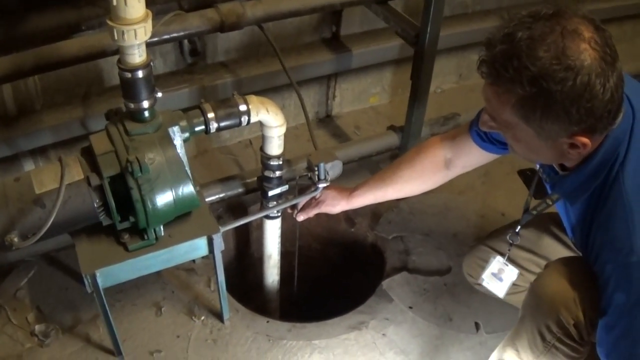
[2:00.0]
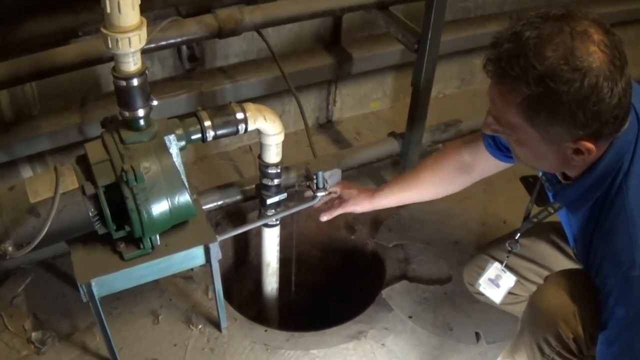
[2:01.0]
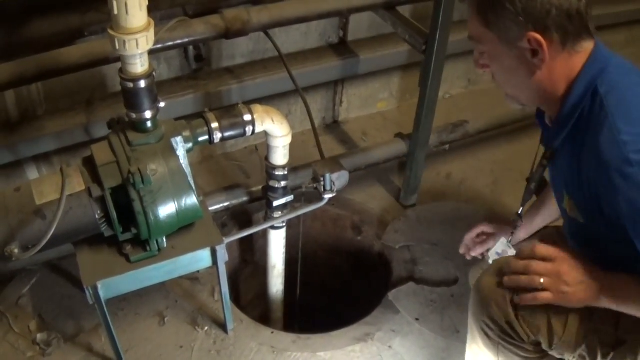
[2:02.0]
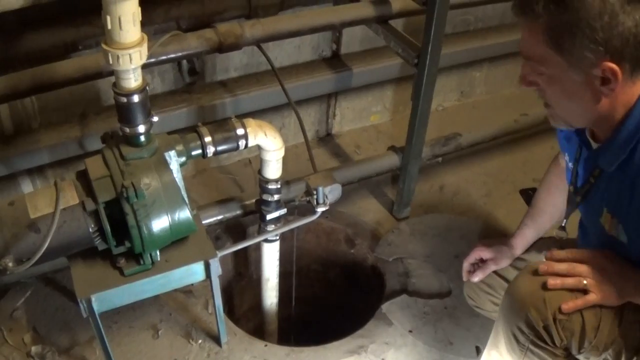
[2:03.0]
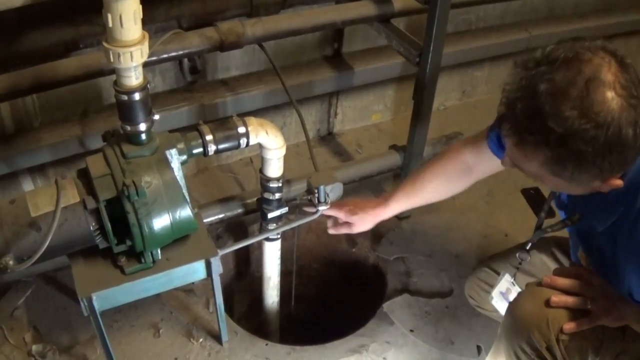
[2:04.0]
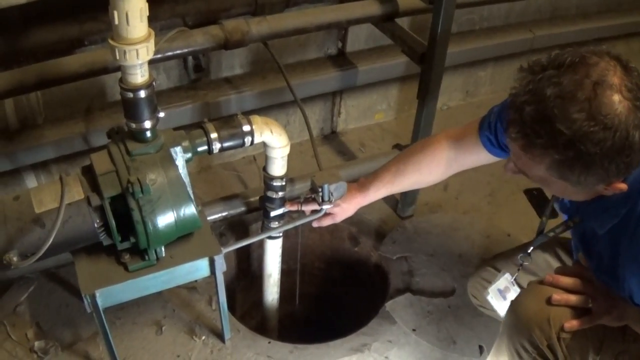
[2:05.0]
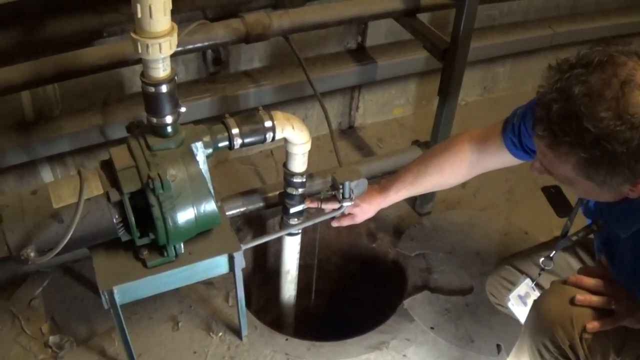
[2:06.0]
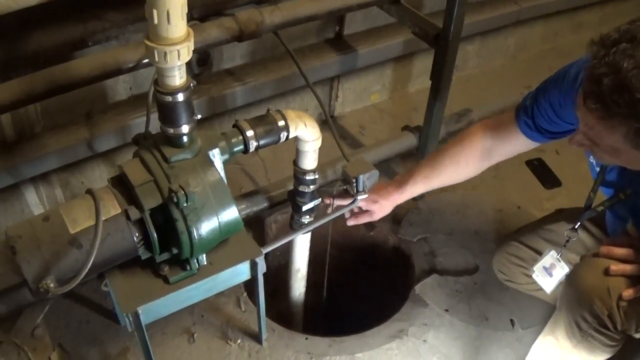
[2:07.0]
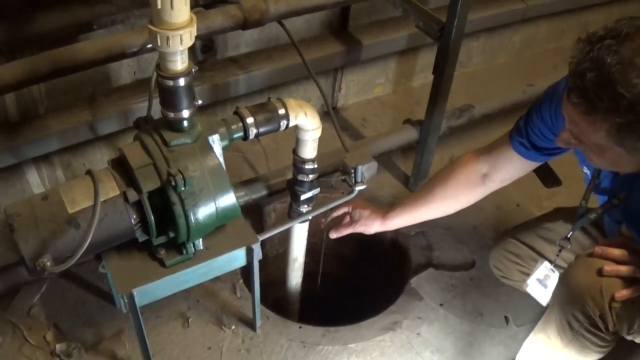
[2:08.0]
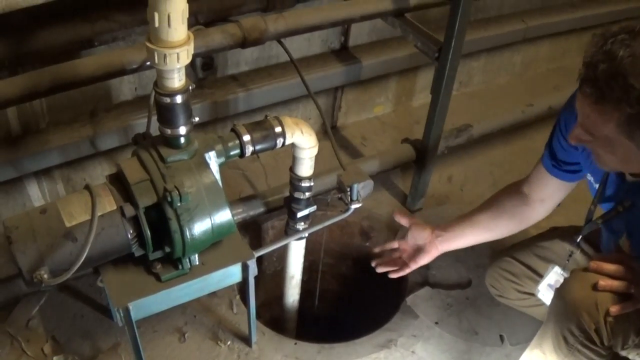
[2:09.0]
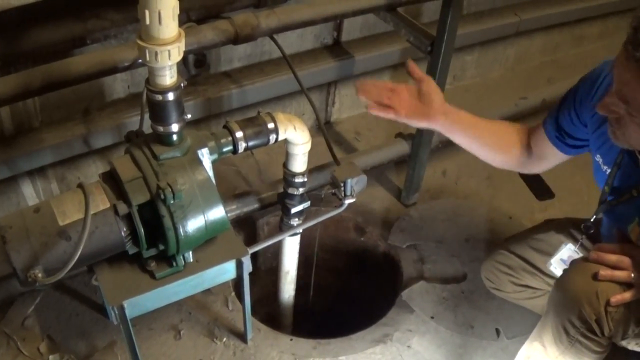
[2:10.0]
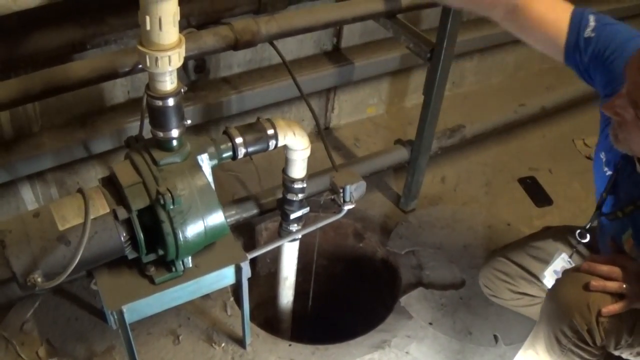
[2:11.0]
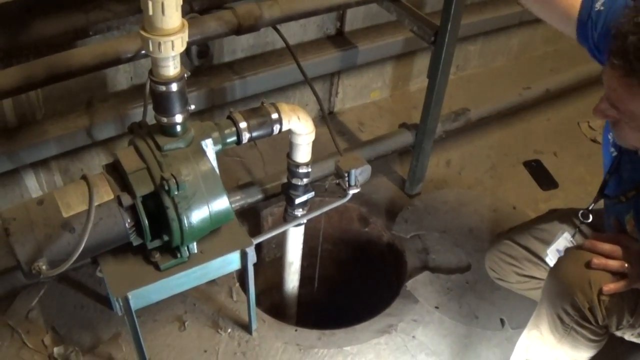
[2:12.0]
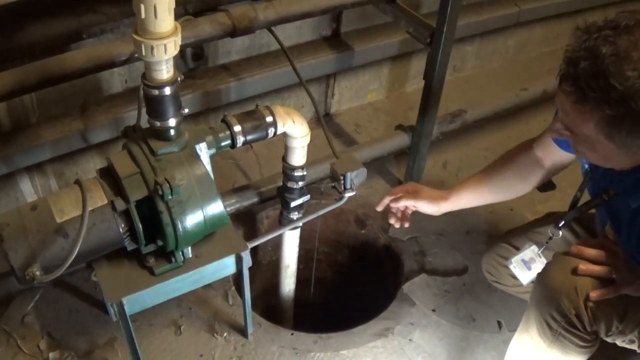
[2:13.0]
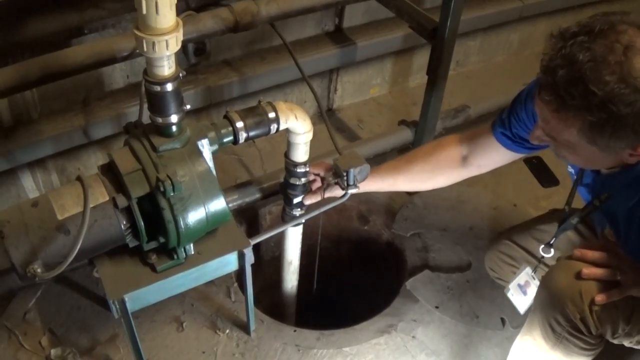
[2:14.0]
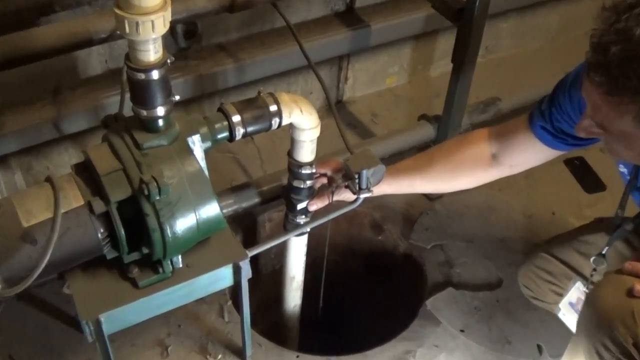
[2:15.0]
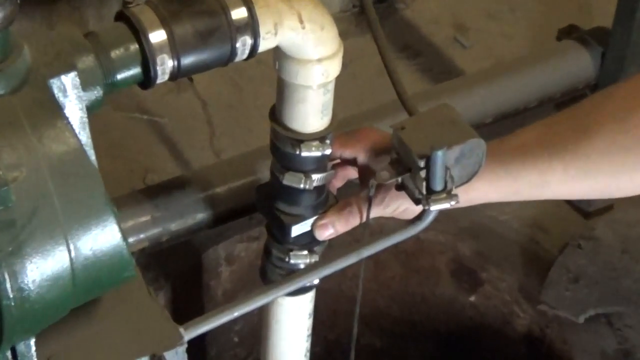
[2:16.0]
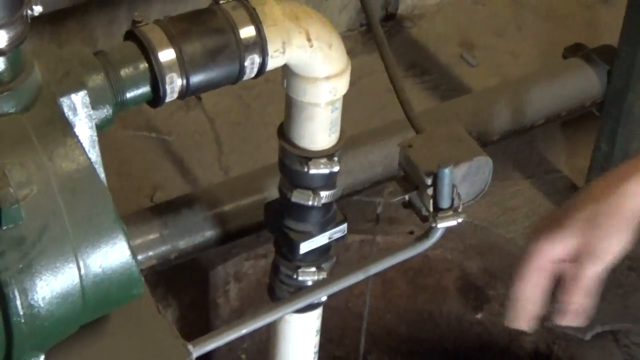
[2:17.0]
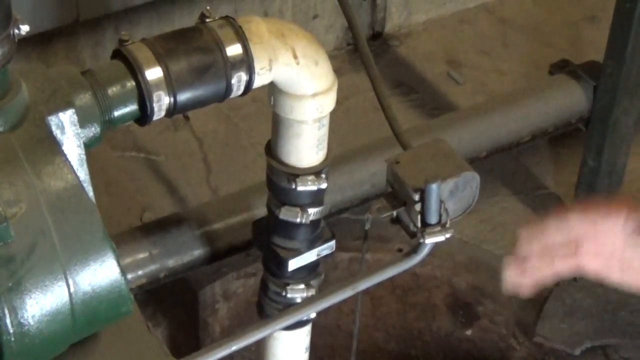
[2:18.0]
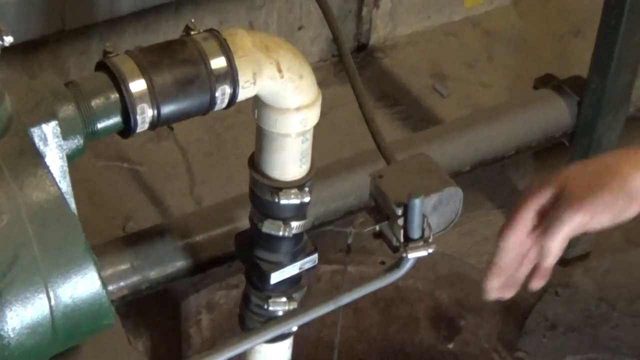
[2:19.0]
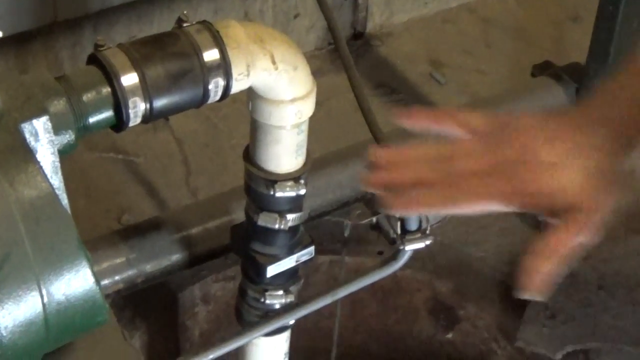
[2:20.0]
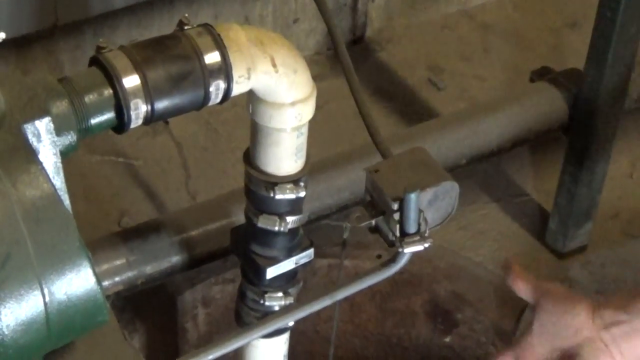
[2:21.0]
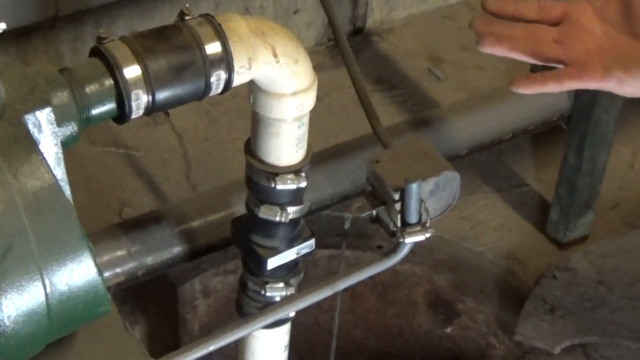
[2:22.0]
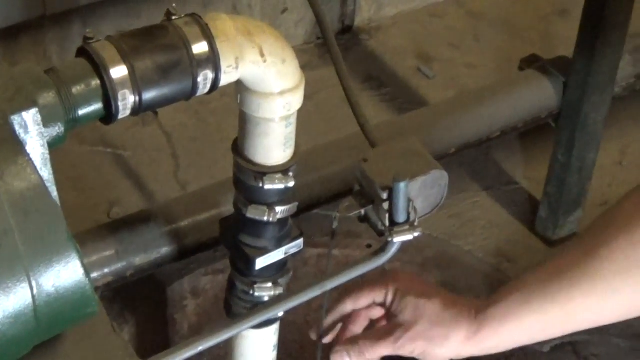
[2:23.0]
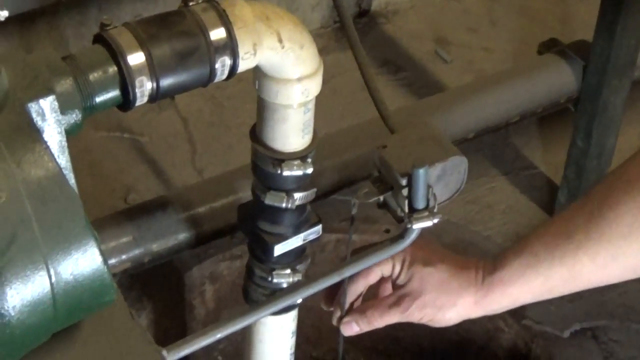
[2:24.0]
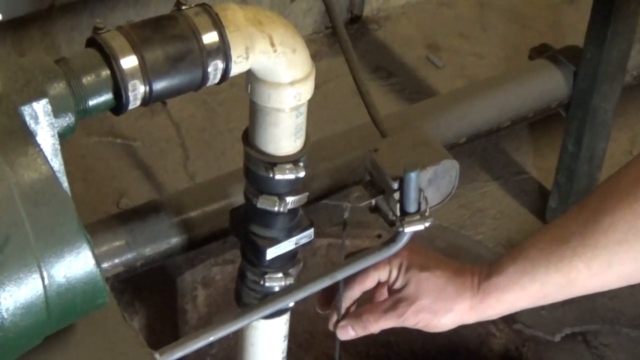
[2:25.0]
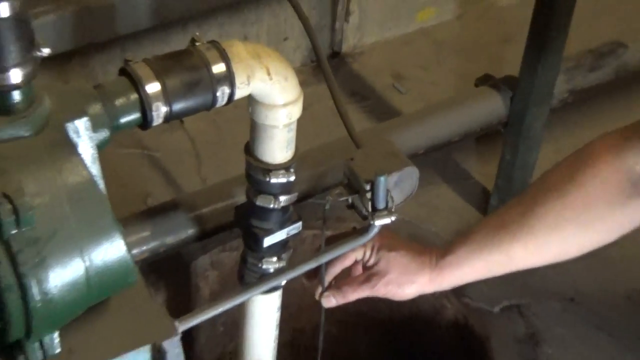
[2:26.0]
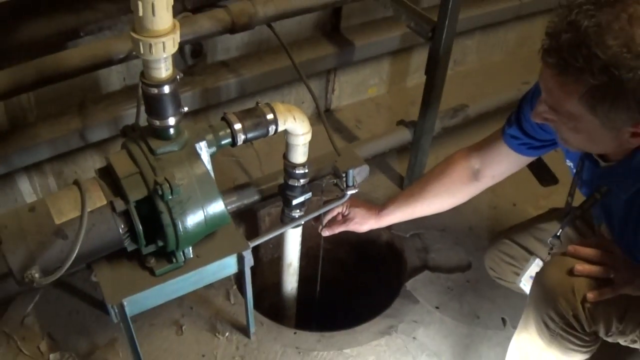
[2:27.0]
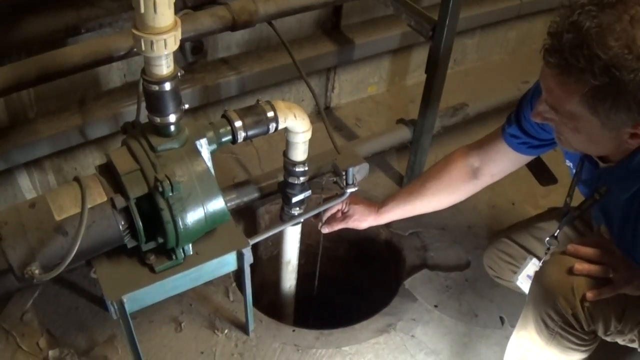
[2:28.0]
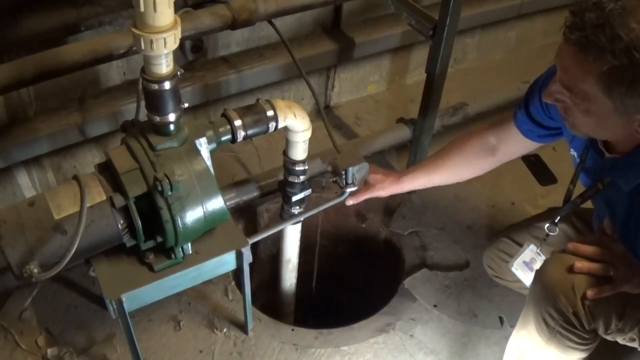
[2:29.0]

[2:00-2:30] The man, still squatting, gestures with his hands moving around, up and down, and across, as if explaining how the pump works and how the liquid is pumped from various places. The badge hangs from his neck and he wears khaki cargo pants. He holds the string attached to something that looks like a plumb bob, looks at the well or cylindrical hole, then touches the black connector. His right hand moves from the hole to the connector near the pump or motor, gesturing that the liquid comes from the hole to the pump and is then pumped upwards. He touches the black connector, moves his hand up and down in a circular motion, then touches the plumb bob-like string. The cameraman zooms in and out as the man explains.